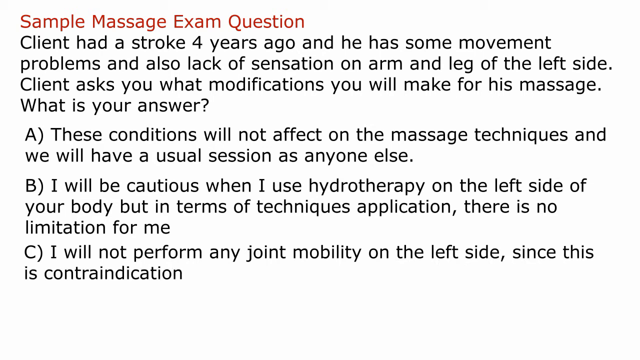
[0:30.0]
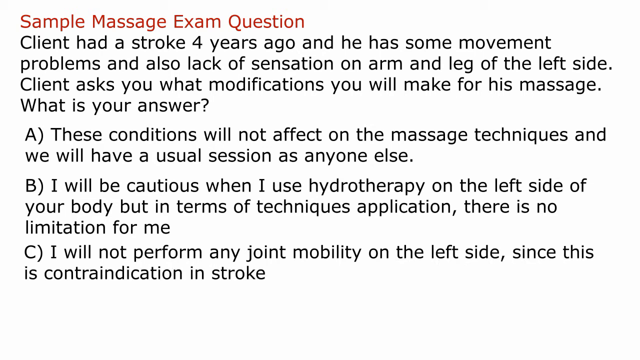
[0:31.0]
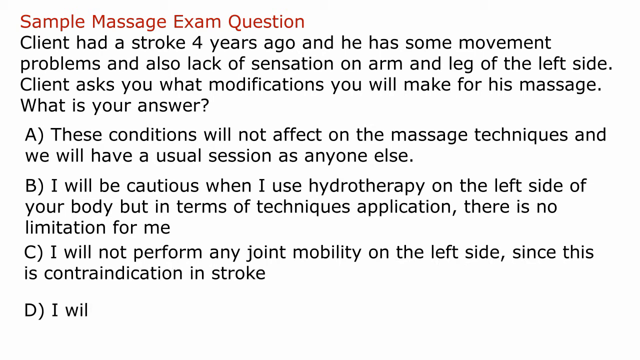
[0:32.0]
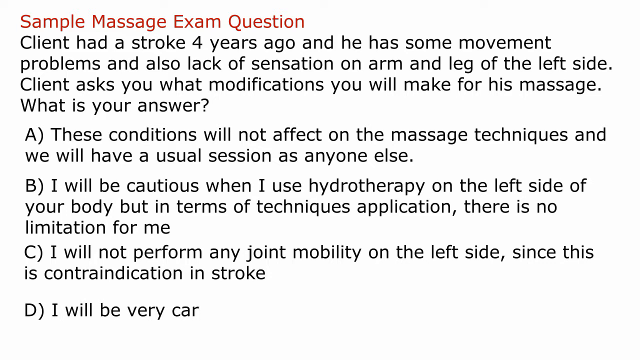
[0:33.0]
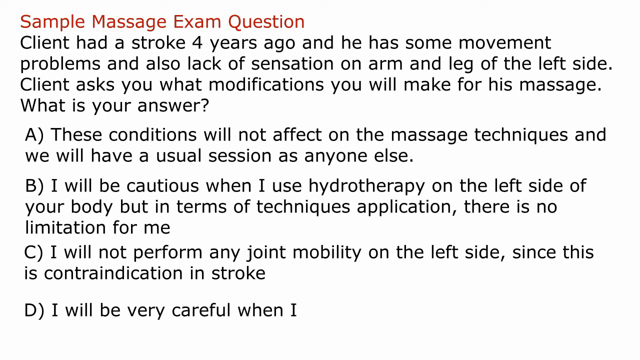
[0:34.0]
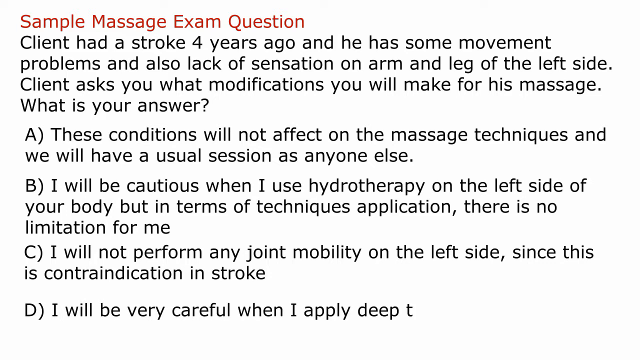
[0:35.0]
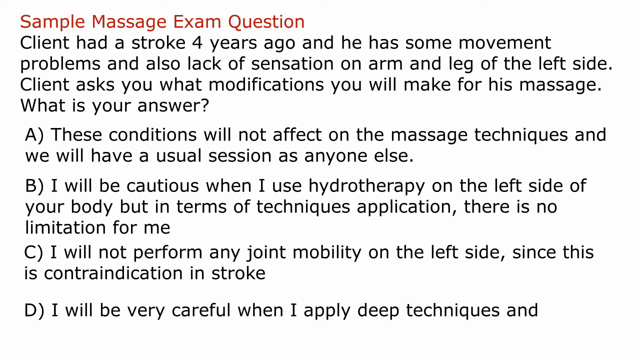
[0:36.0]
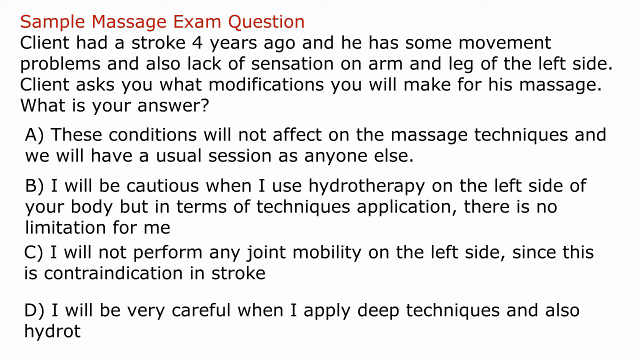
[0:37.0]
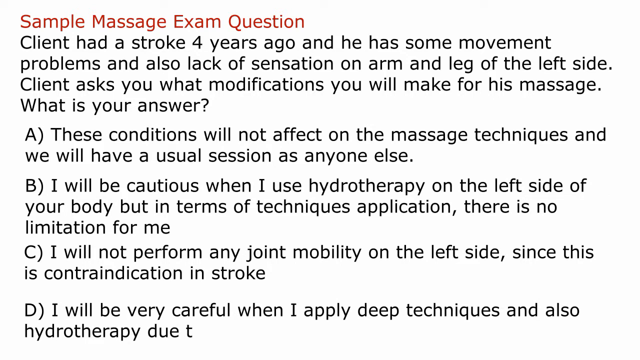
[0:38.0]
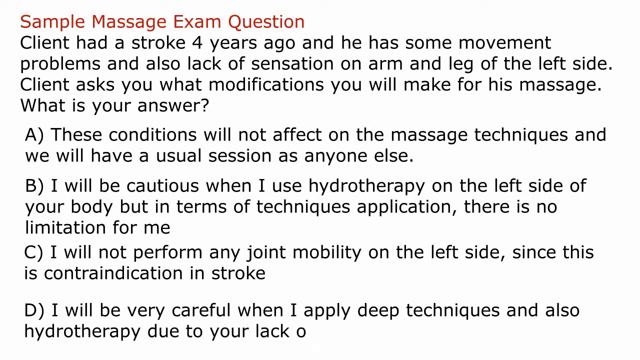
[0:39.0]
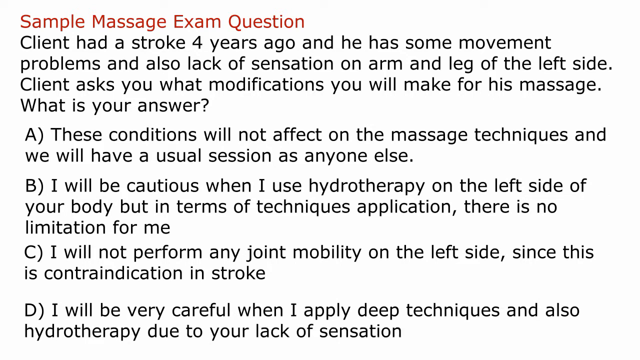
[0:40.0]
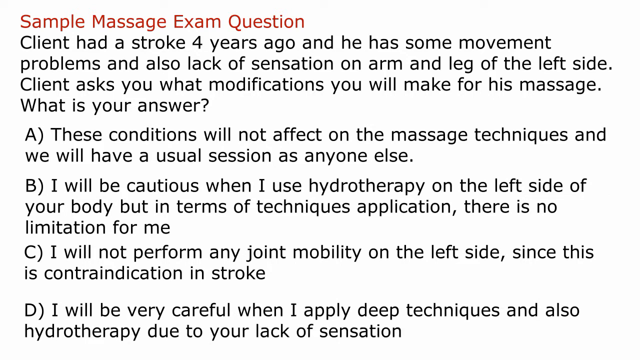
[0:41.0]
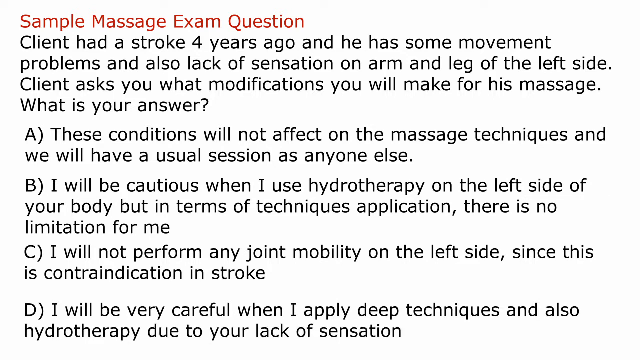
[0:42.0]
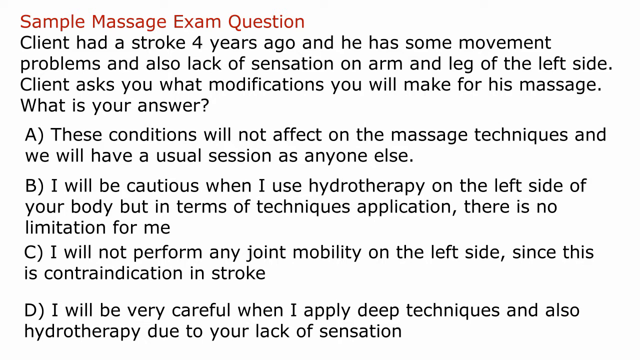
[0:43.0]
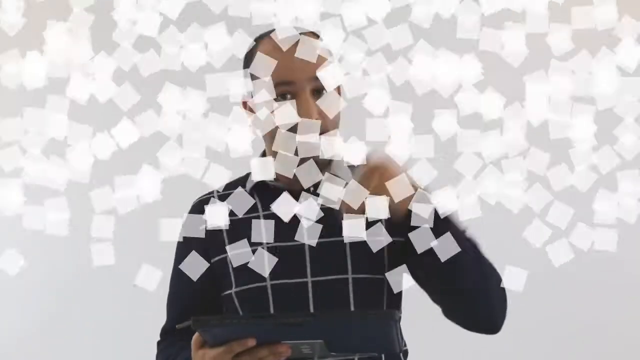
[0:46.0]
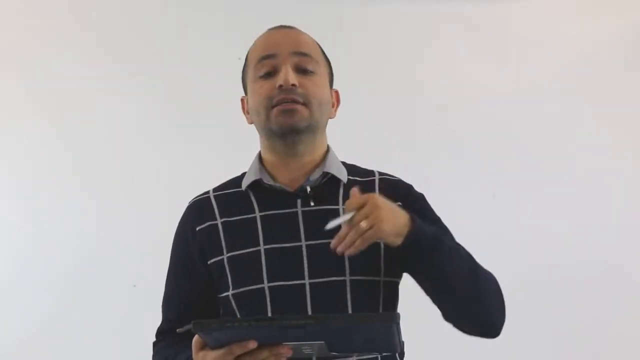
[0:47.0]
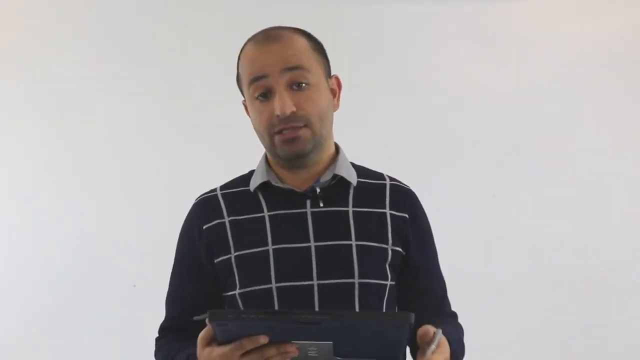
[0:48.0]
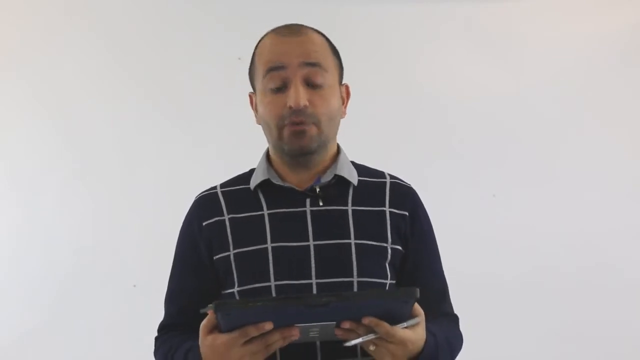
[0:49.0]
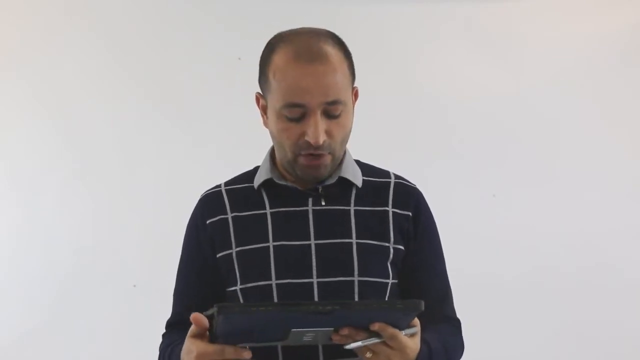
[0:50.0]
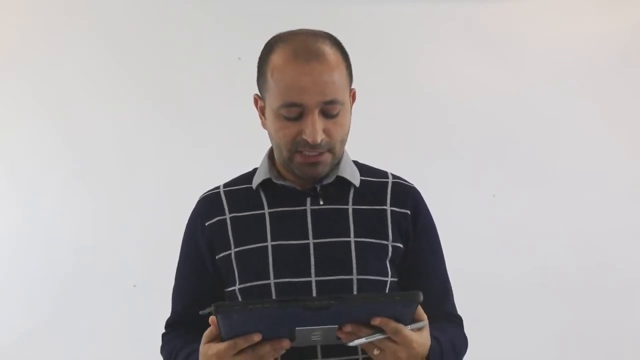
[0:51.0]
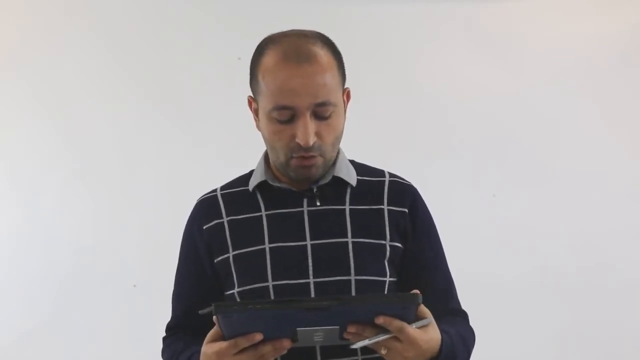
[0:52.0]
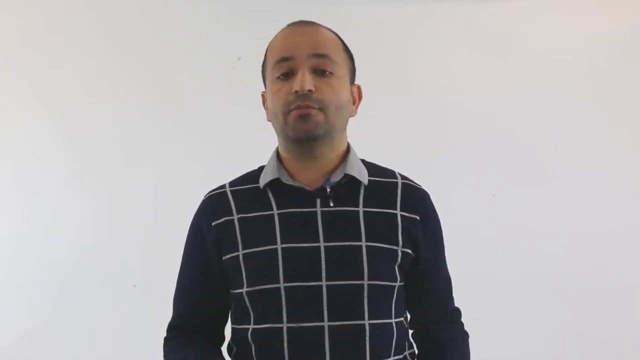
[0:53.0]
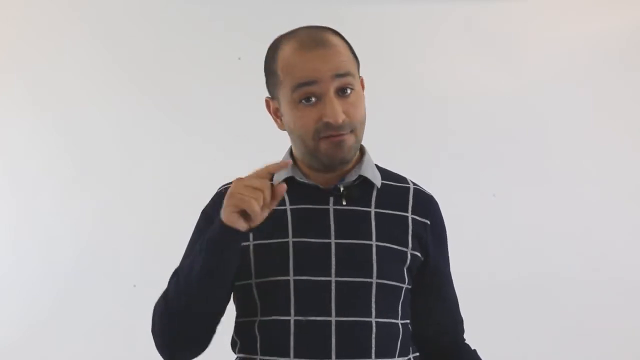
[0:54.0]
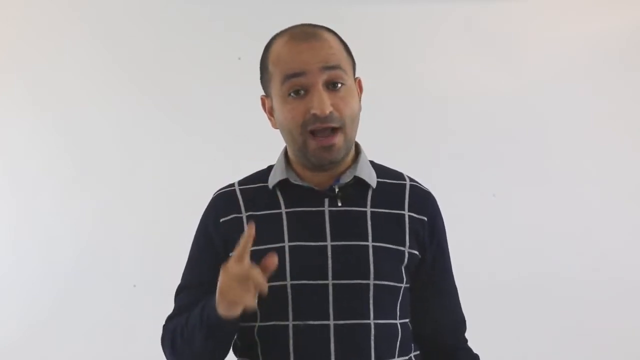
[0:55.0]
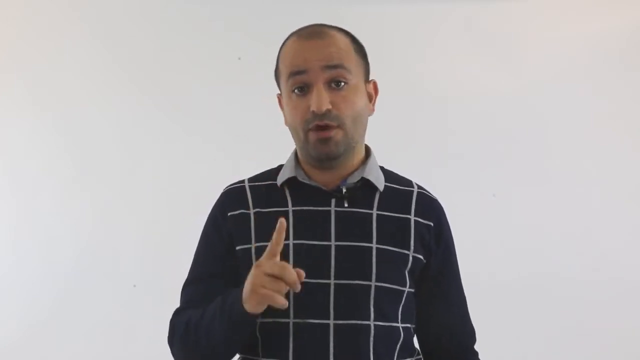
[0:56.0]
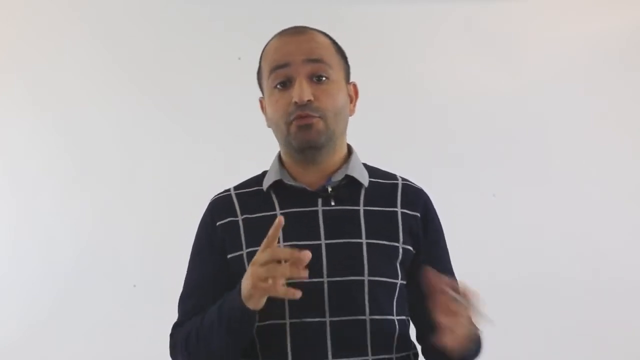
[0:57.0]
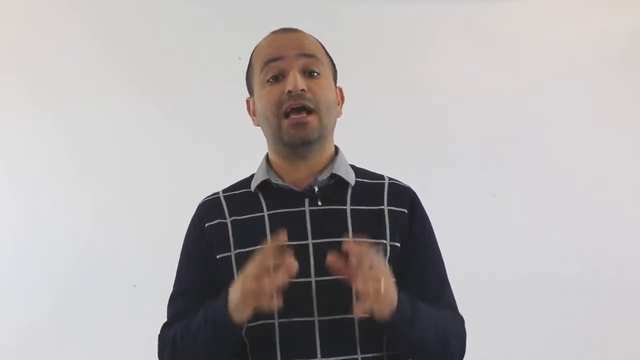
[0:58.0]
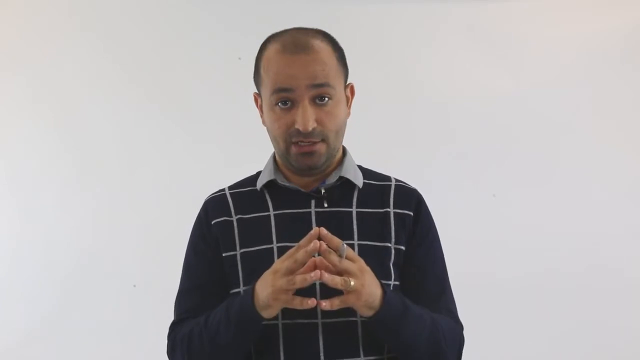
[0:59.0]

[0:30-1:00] The sample massage exam question is on screen: red and black text over a white background. The red text at the top reads "sample massage exam question," and the black text reads: "client had a stroke four years ago, and he has some movement problems and also a lack of sensation on the arm and the leg of the left side. Client asks you what modifications you will make for his massage, what is your answer?" Four multiple-choice answers follow: A, "these conditions will not affect on the massage techniques, and we will have a usual session as anyone else"; B, "I will be cautious when I use hydrotherapy on the left side of your body, but in terms of technique applications, there is no limitation for me"; C, "I will not perform any joint mobility on the left side since this is a contraindication in stroke"; and D, "I will be very careful when I apply deep techniques and also hydrotherapy due to your lack of sensation." The video then transitions to a Middle Eastern man wearing a collared shirt with a sweater over top that has a checkered pattern. He is balding and looks straight at the camera.